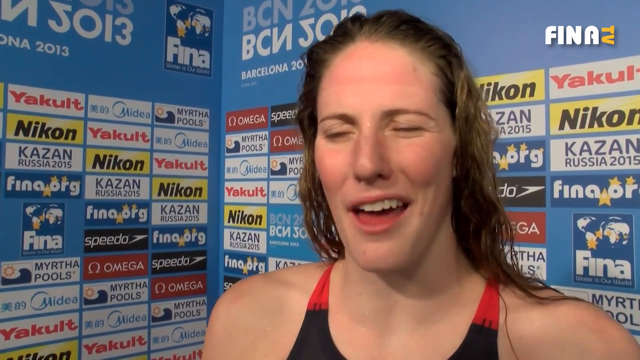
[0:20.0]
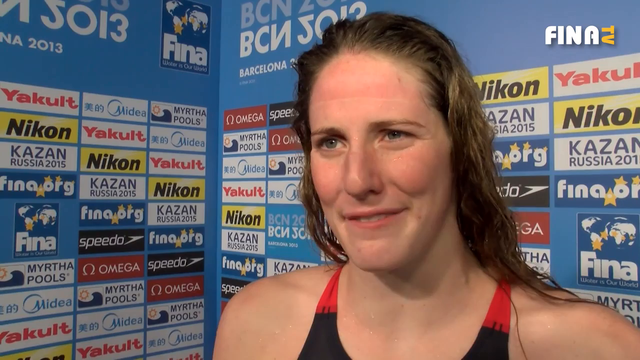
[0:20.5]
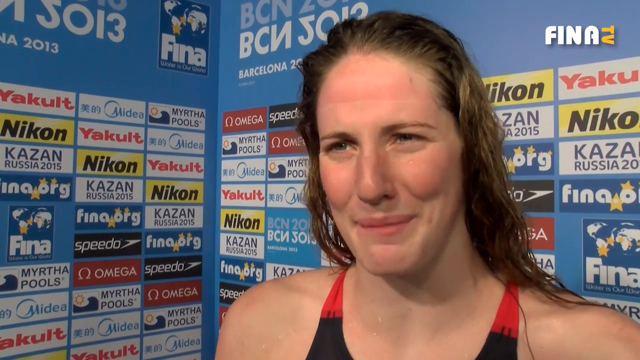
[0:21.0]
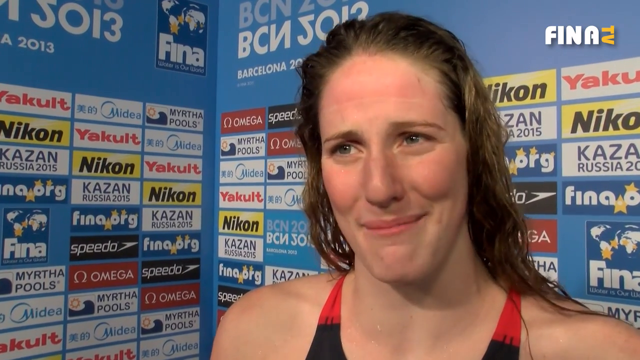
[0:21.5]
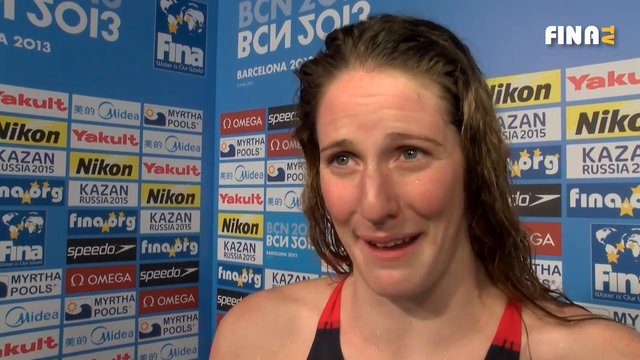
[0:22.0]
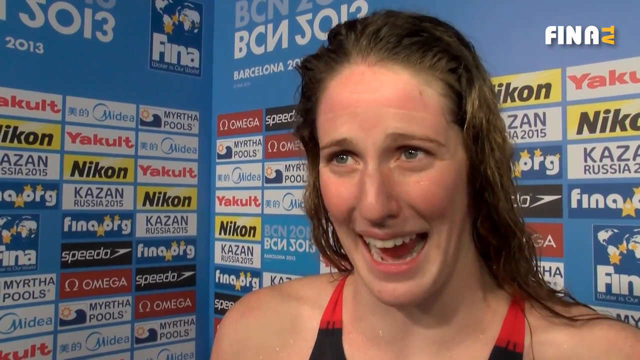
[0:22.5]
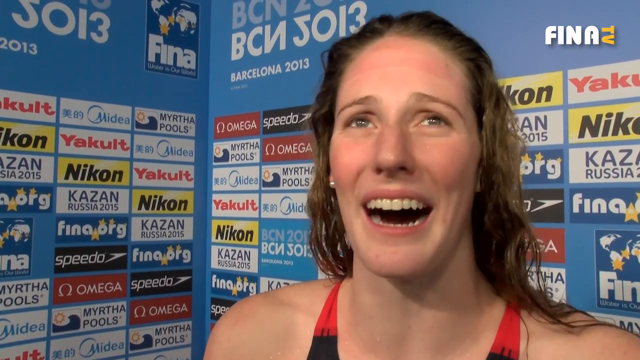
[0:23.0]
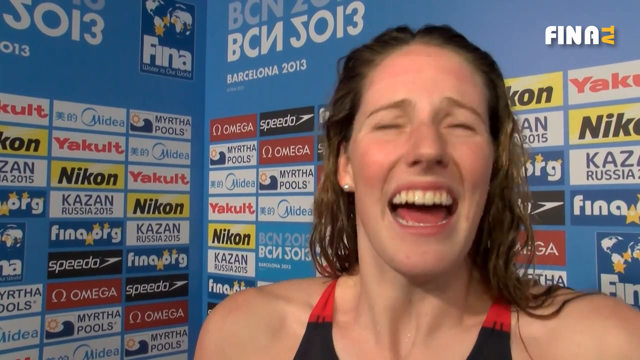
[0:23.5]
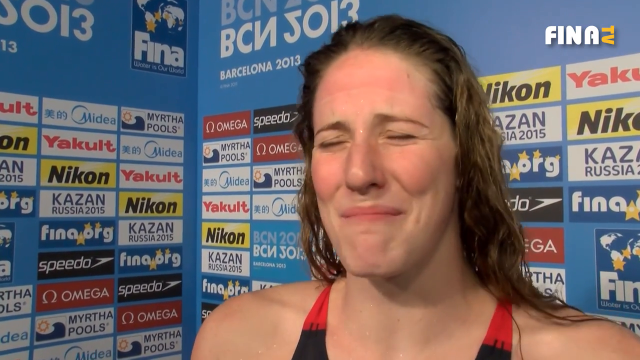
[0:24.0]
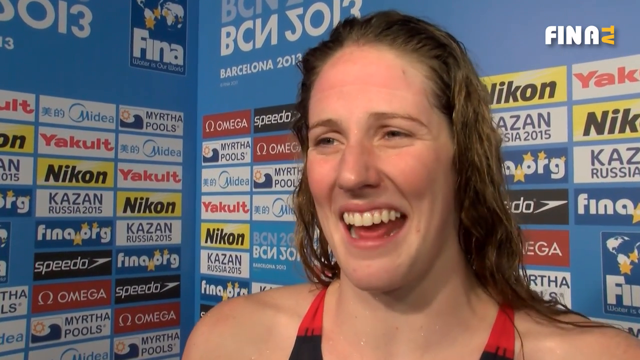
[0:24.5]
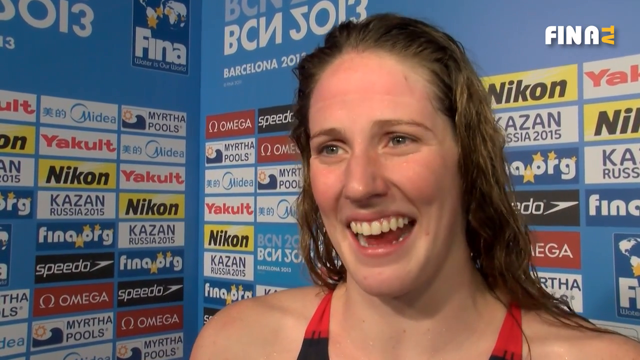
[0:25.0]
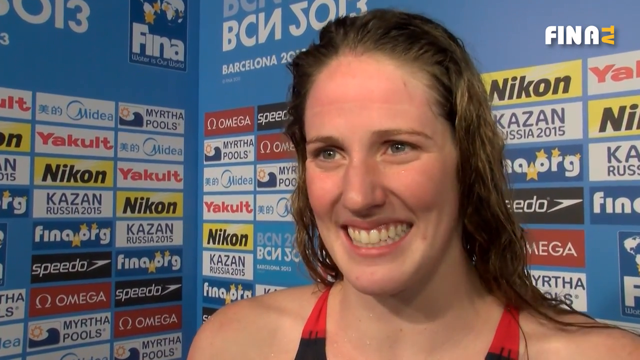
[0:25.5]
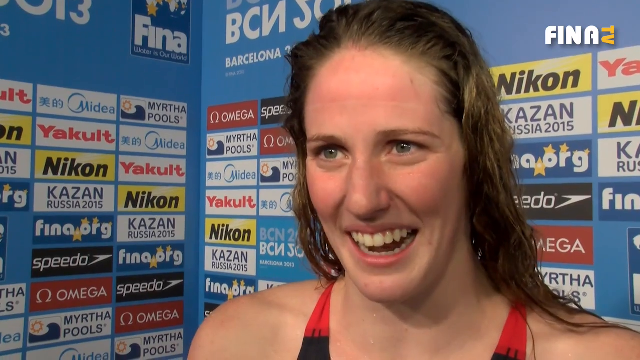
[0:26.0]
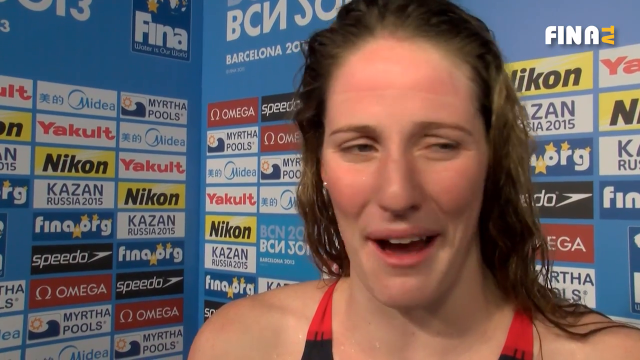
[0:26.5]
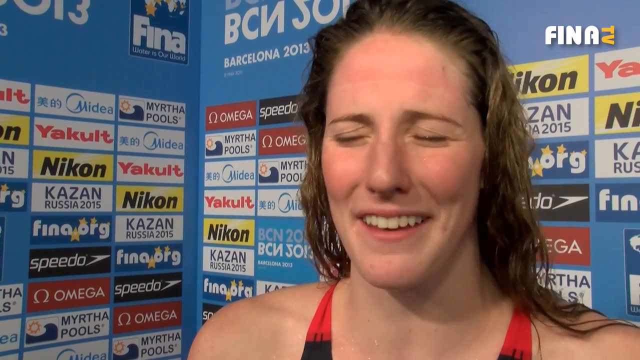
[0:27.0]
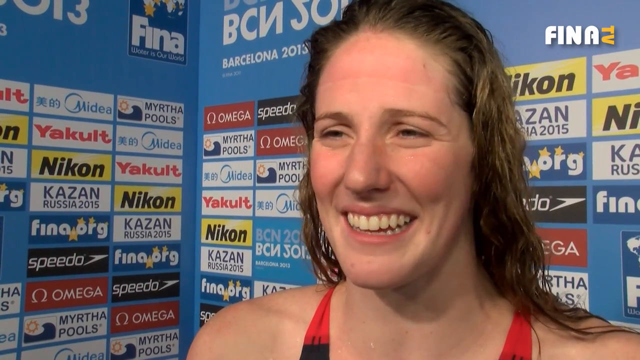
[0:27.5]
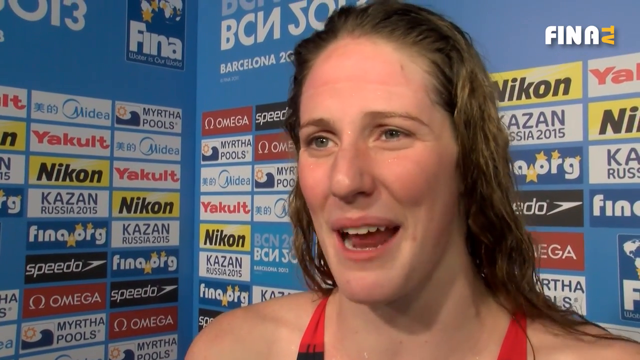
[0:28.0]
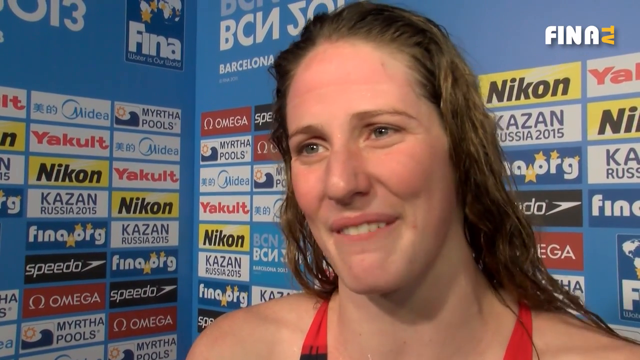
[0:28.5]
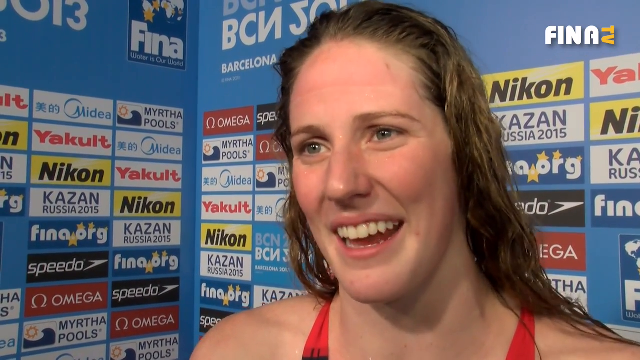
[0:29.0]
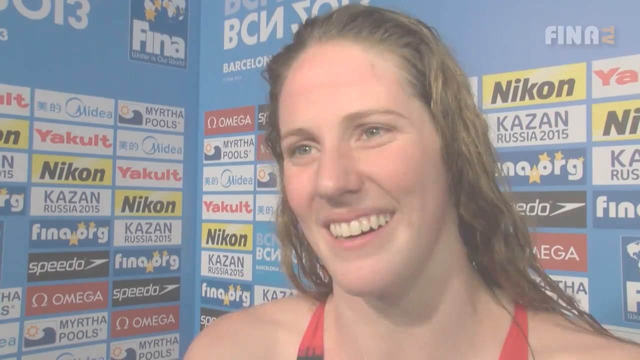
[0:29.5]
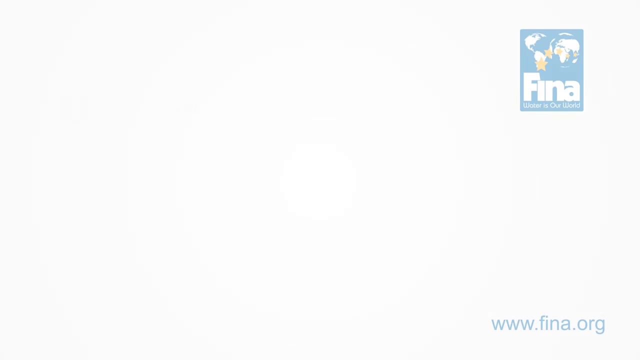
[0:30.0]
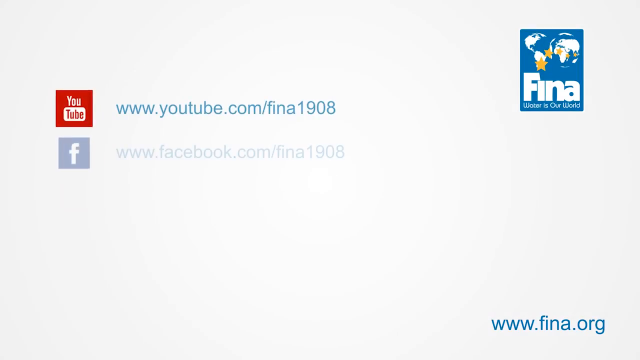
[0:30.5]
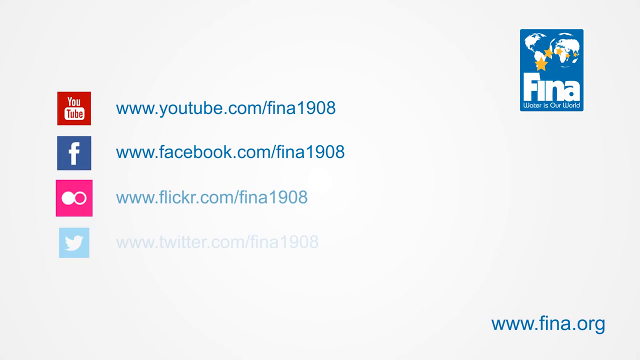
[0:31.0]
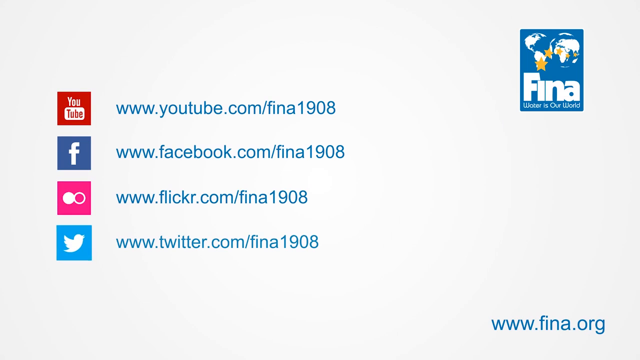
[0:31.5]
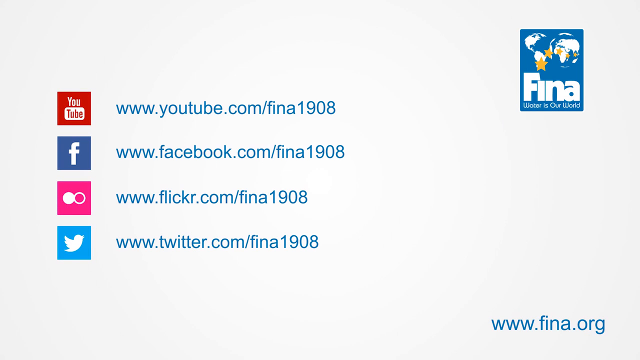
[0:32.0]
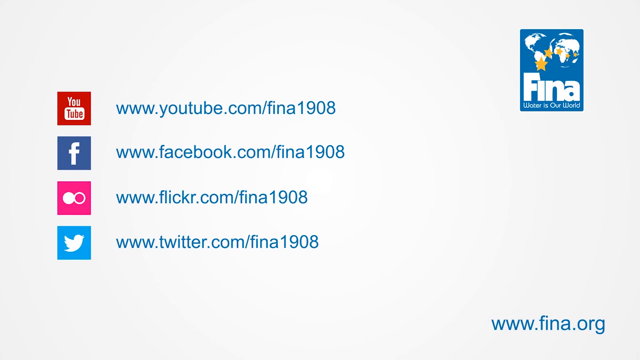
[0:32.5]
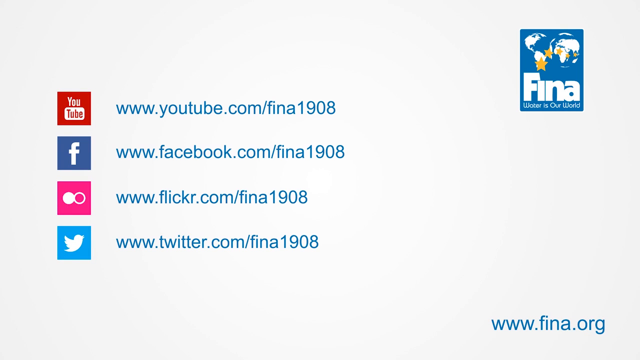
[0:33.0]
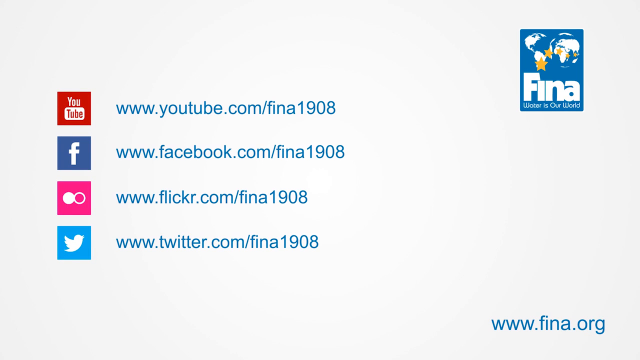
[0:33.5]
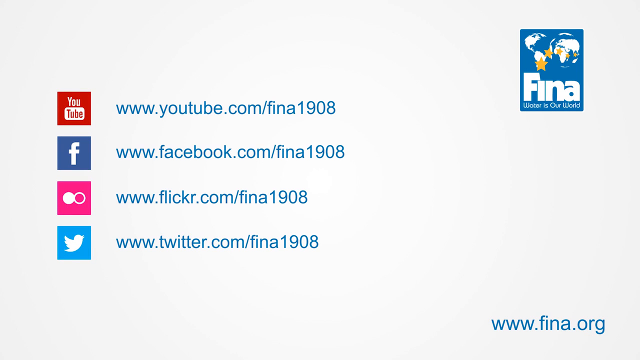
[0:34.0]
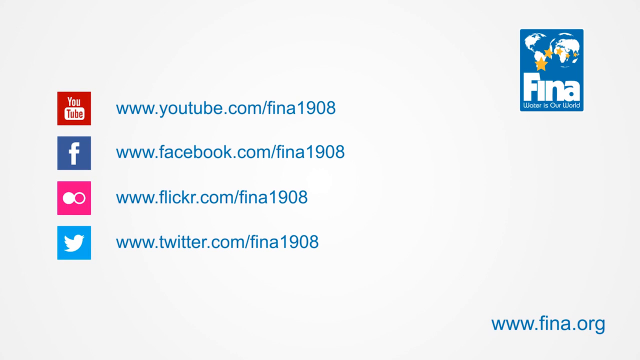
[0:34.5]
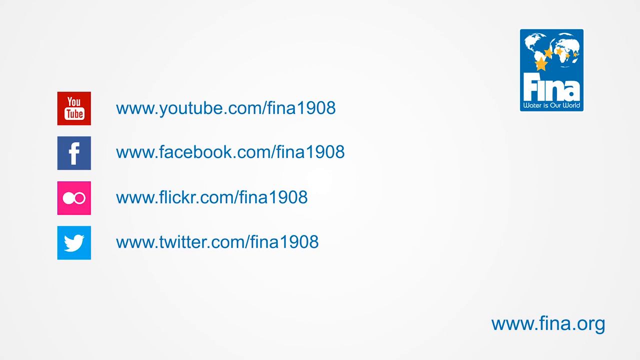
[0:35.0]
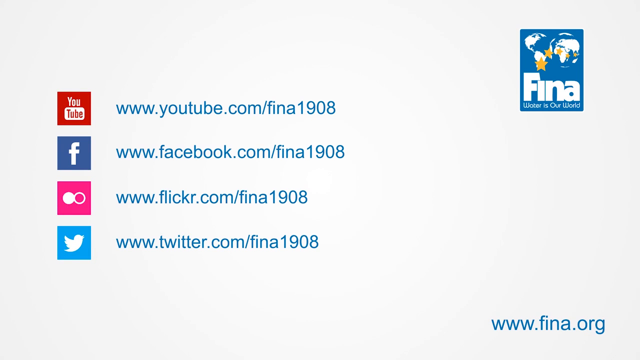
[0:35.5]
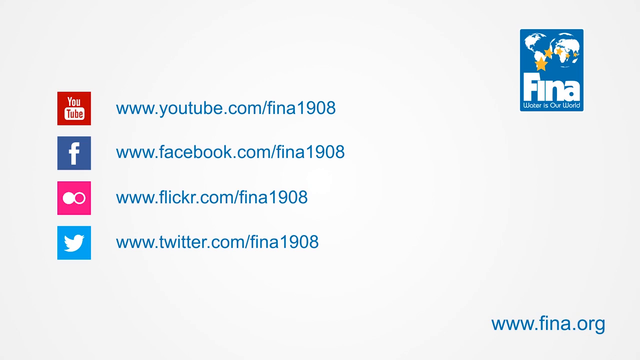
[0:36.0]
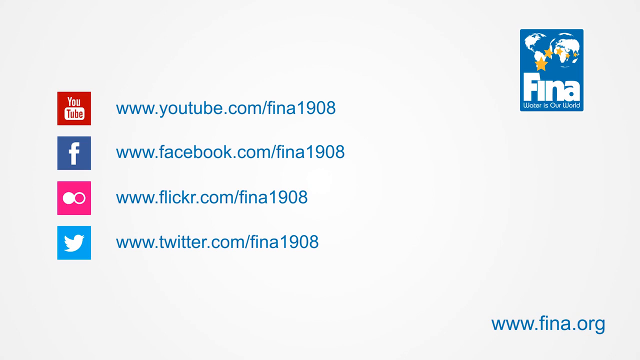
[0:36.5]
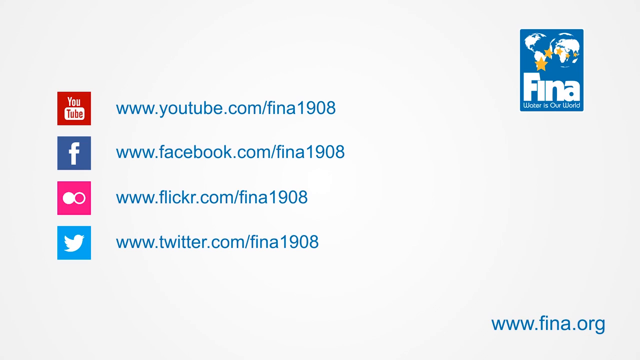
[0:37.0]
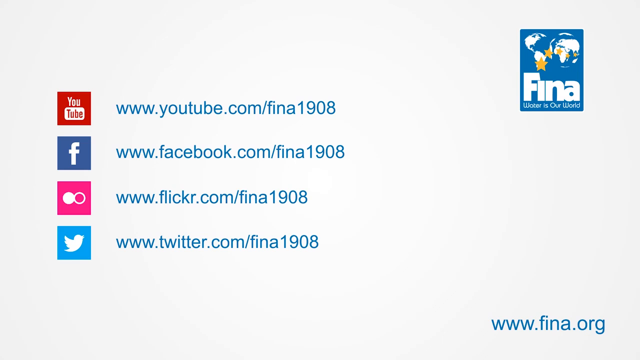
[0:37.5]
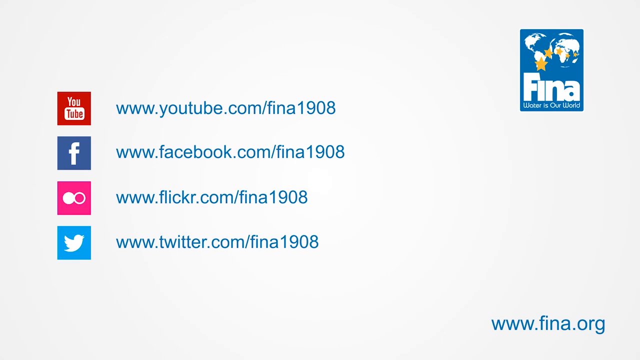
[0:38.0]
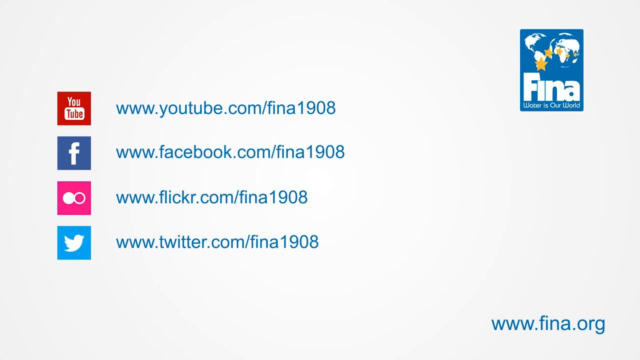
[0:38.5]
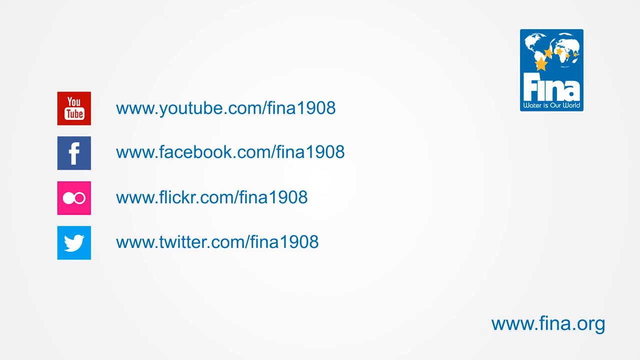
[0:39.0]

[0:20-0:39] A woman talks to a camera while being interviewed, presumably after performing in a swimming event, for FINA TV. She is in what appears to be a media booth. She is white, with long brown hair and brown eyes, and wears a red swimsuit top. She talks very expressively into the camera, apparently about how she just did in the event. The video then pans out to a white splash page showing "FINA, water is our world," with links to the FINA YouTube page, Facebook page, and Twitter page, and a link to FINA.org. The video stays on the white page. Many sponsor names appear in the background of the media booth, and the event takes place in Barcelona, Spain.